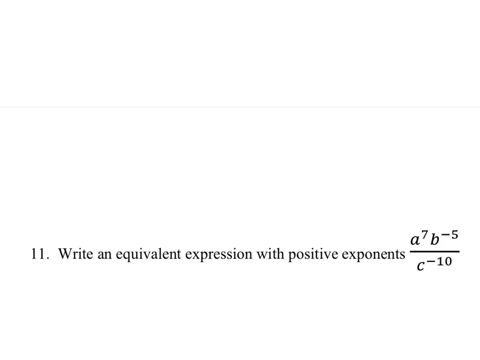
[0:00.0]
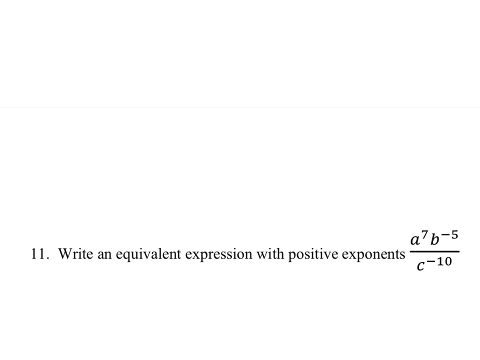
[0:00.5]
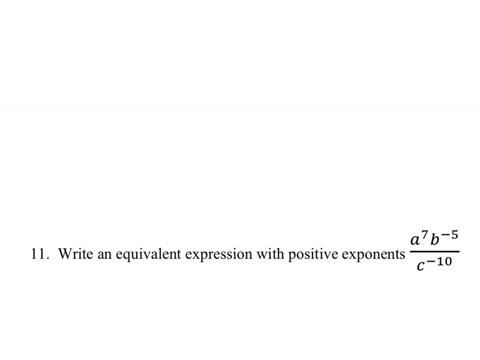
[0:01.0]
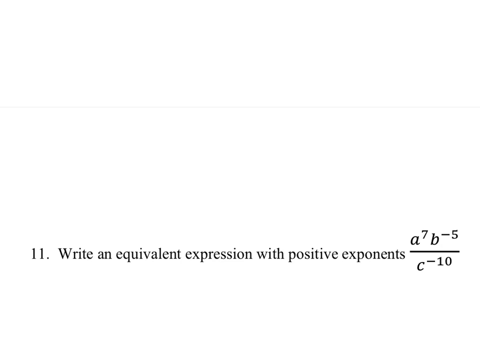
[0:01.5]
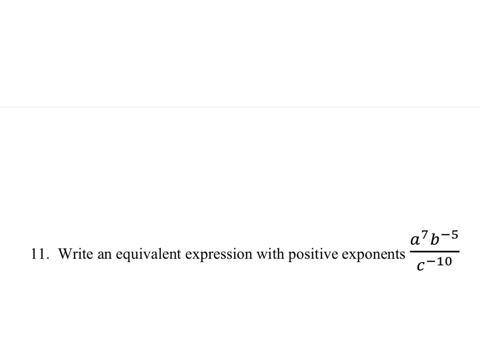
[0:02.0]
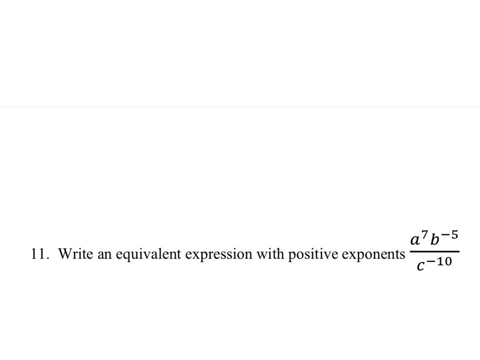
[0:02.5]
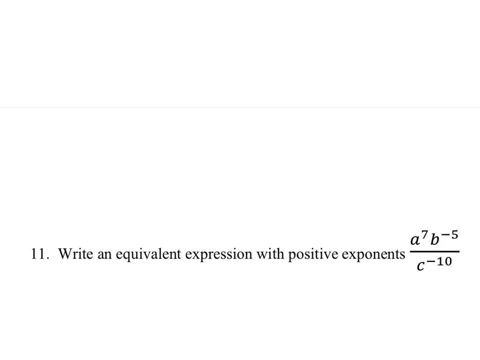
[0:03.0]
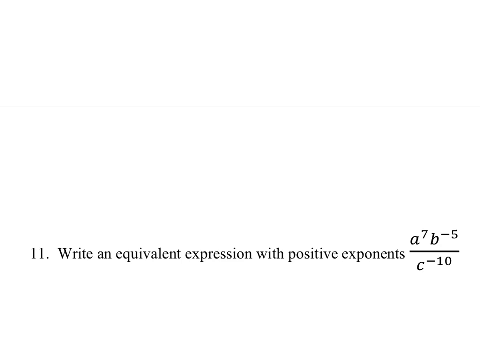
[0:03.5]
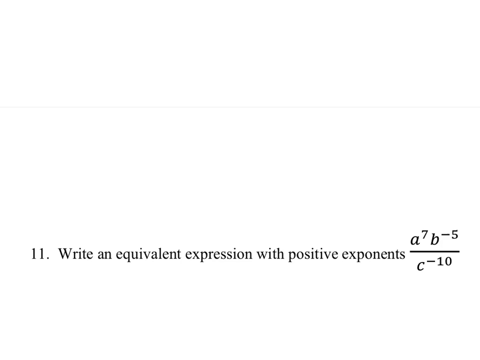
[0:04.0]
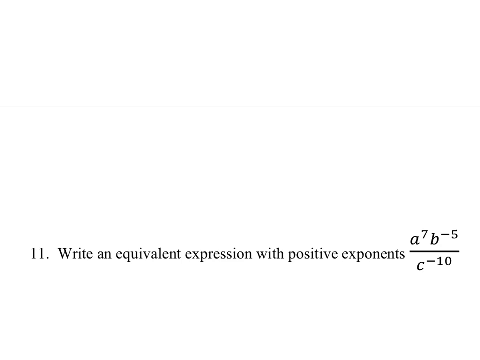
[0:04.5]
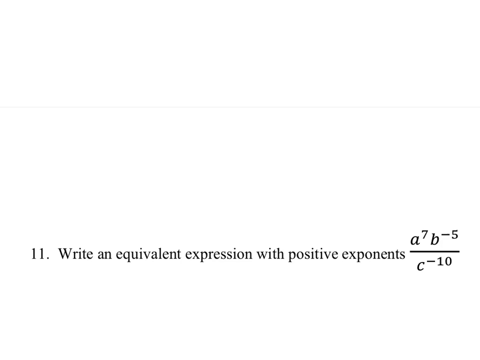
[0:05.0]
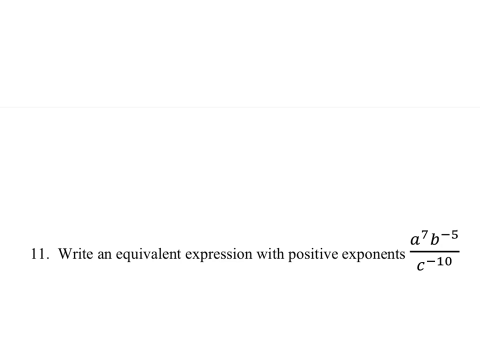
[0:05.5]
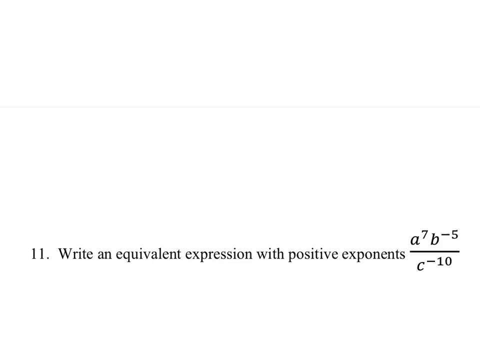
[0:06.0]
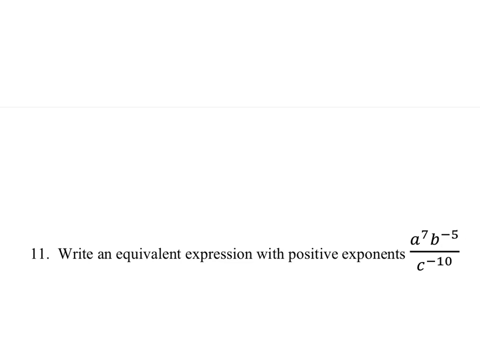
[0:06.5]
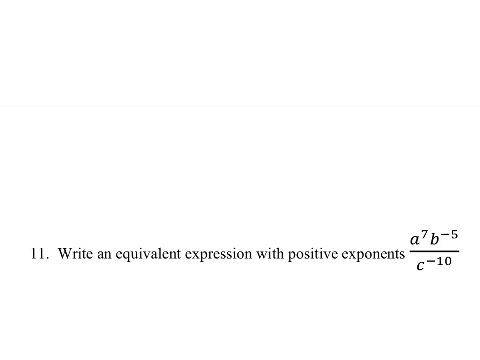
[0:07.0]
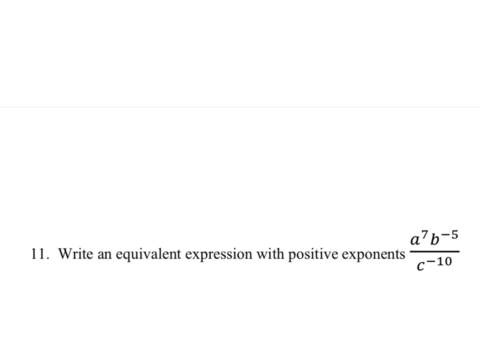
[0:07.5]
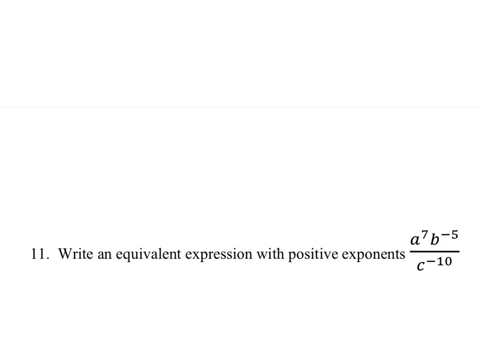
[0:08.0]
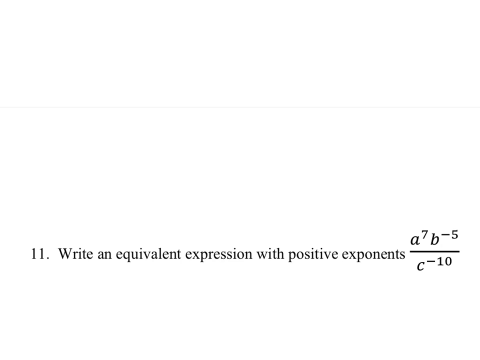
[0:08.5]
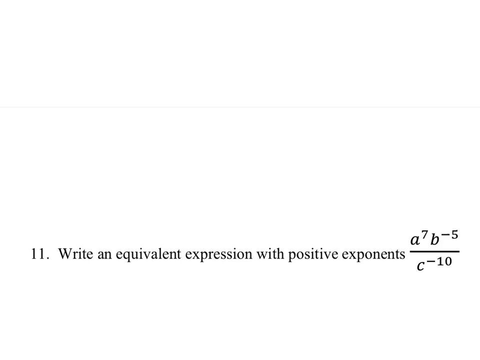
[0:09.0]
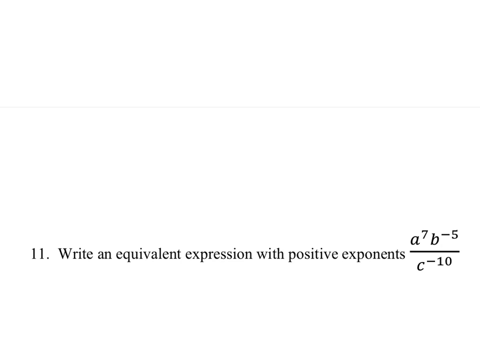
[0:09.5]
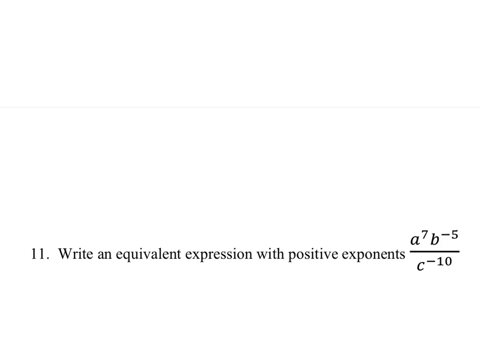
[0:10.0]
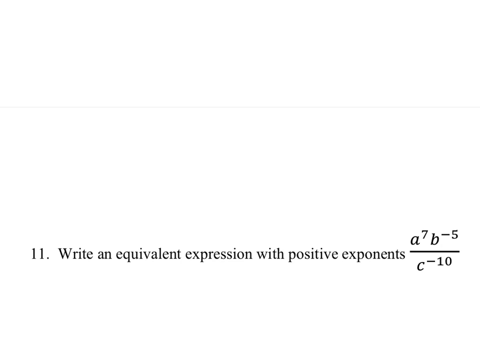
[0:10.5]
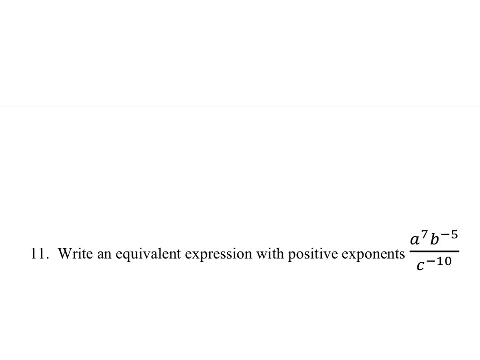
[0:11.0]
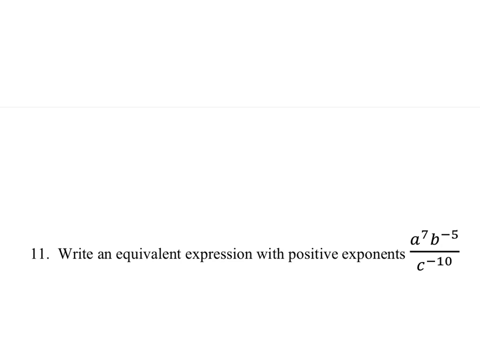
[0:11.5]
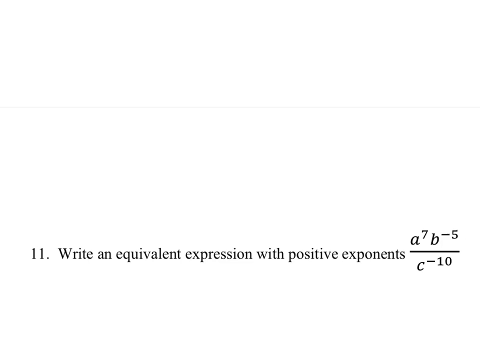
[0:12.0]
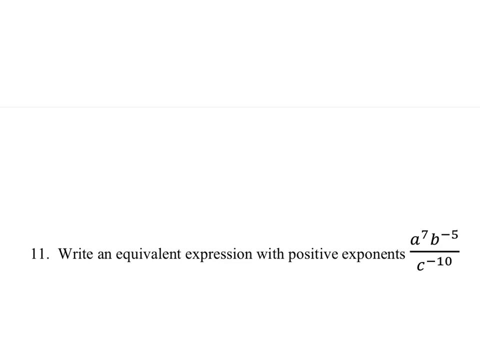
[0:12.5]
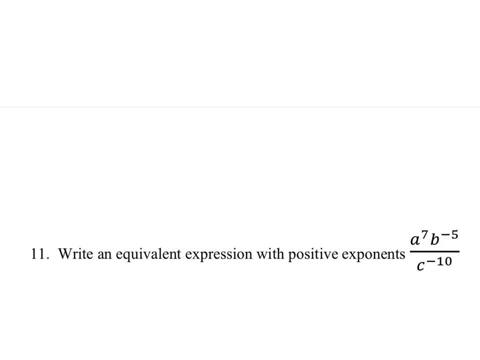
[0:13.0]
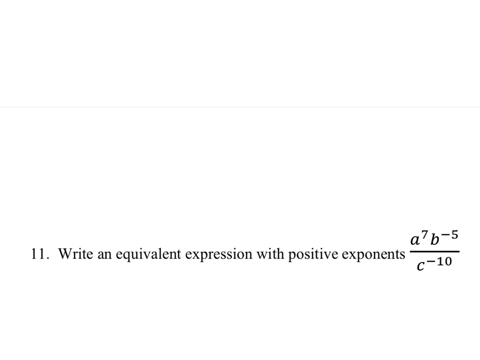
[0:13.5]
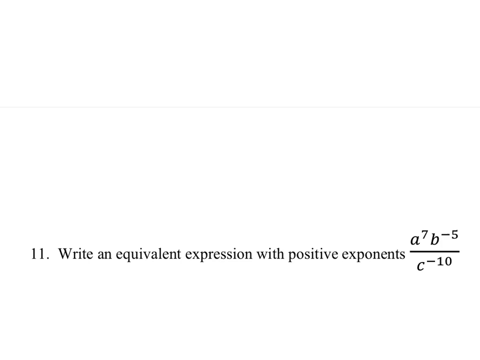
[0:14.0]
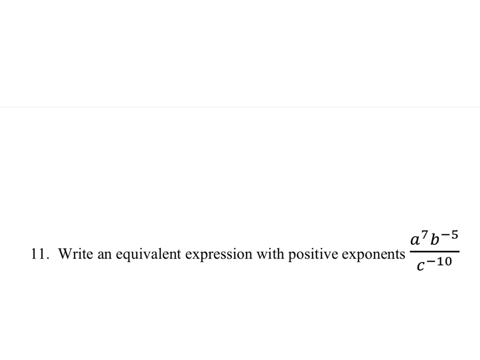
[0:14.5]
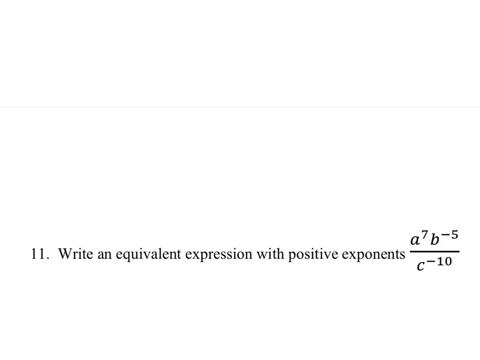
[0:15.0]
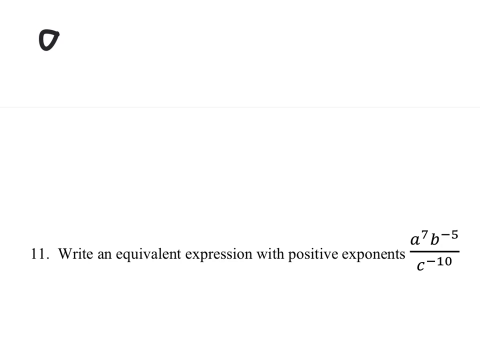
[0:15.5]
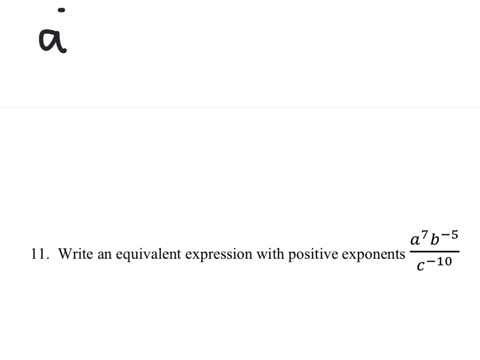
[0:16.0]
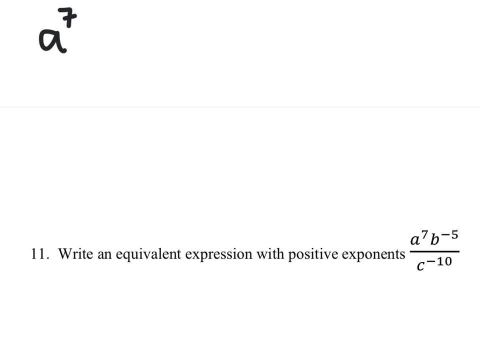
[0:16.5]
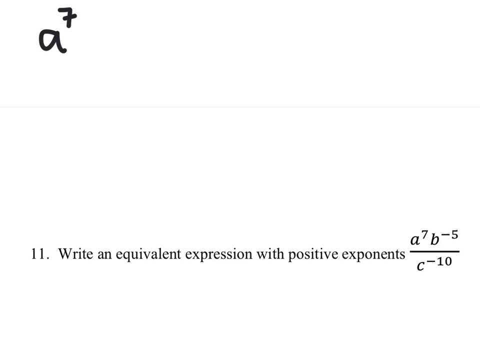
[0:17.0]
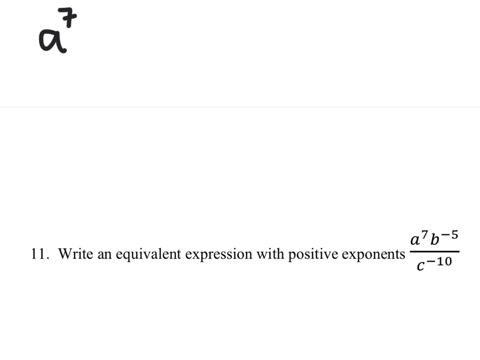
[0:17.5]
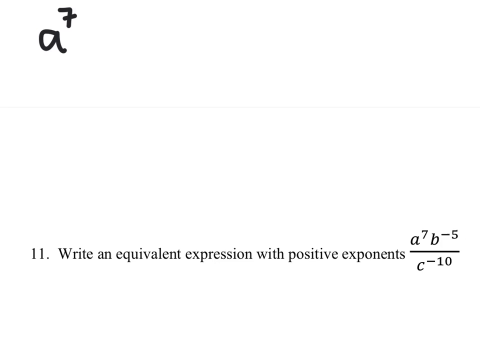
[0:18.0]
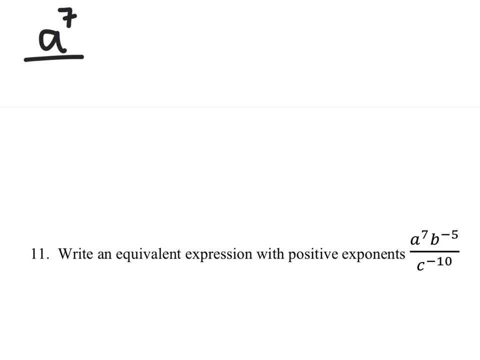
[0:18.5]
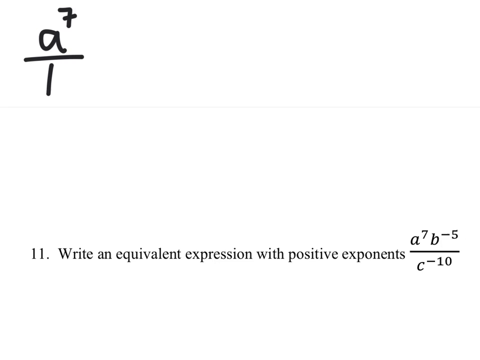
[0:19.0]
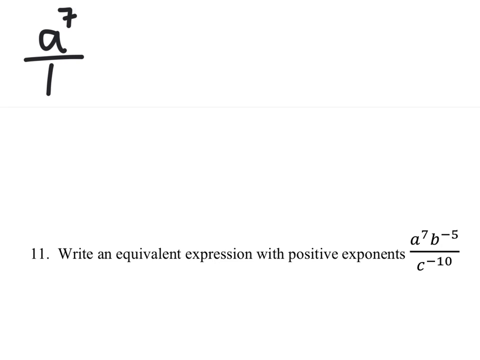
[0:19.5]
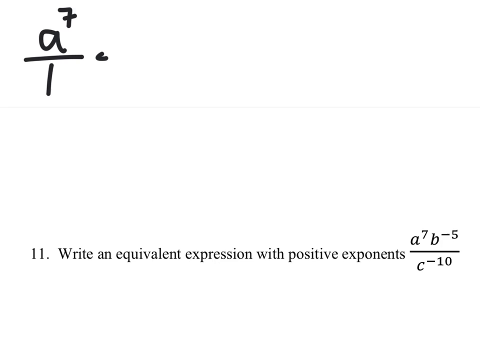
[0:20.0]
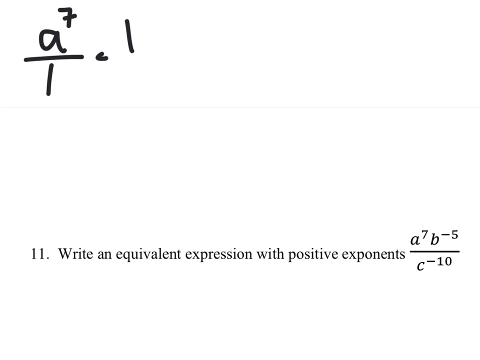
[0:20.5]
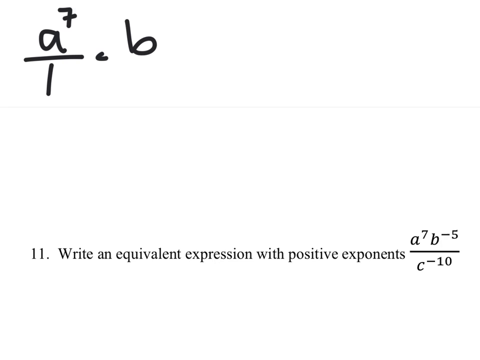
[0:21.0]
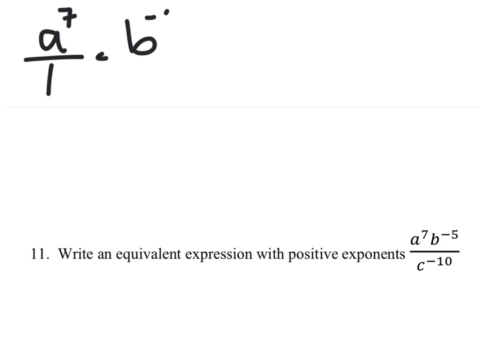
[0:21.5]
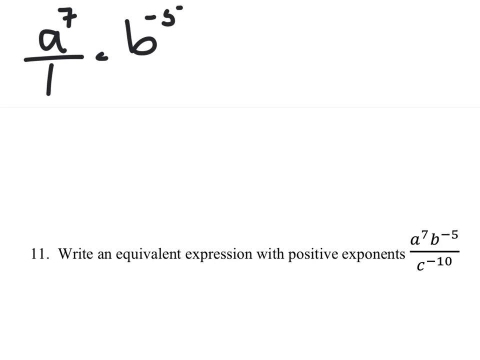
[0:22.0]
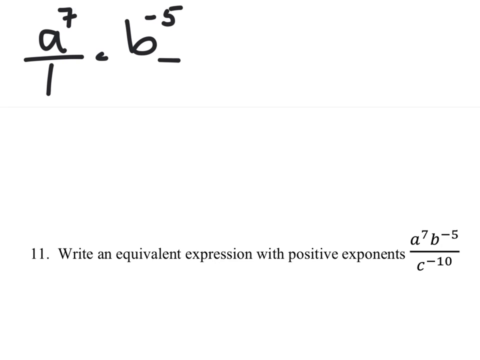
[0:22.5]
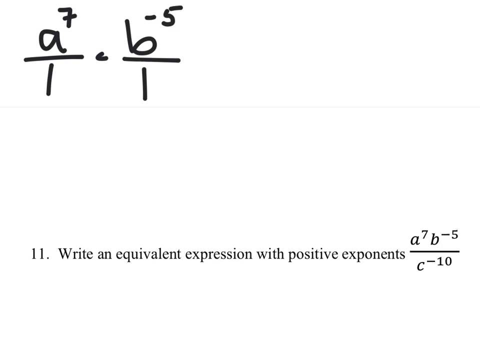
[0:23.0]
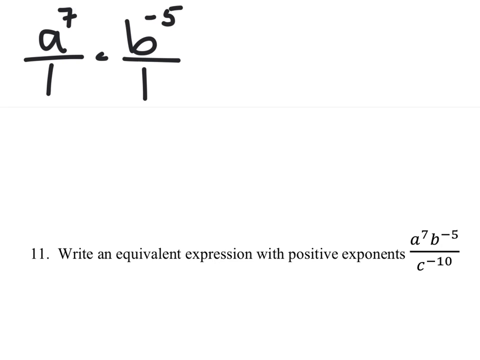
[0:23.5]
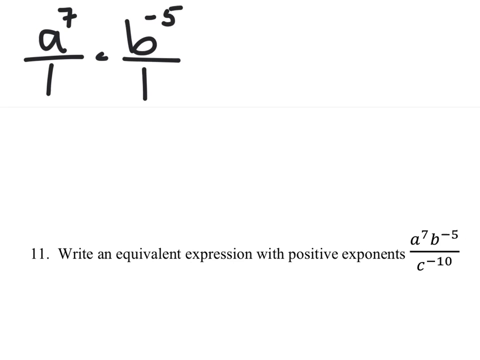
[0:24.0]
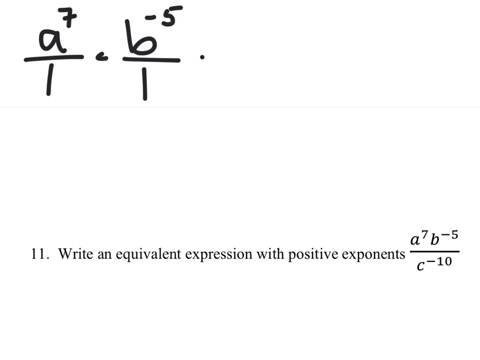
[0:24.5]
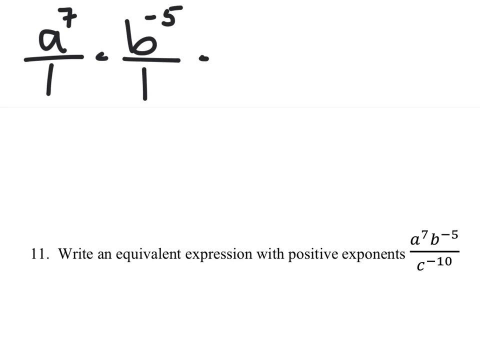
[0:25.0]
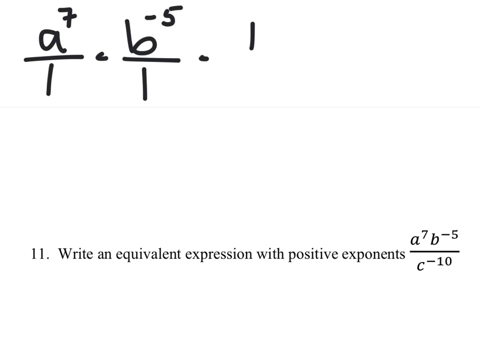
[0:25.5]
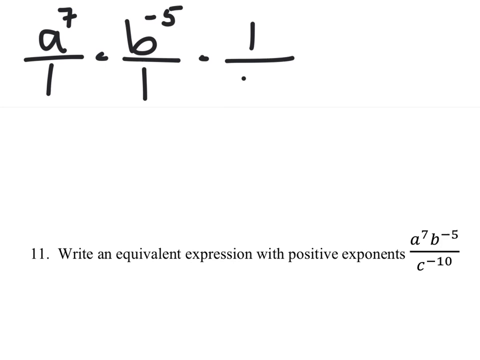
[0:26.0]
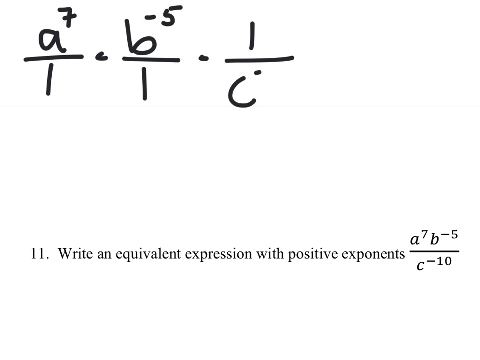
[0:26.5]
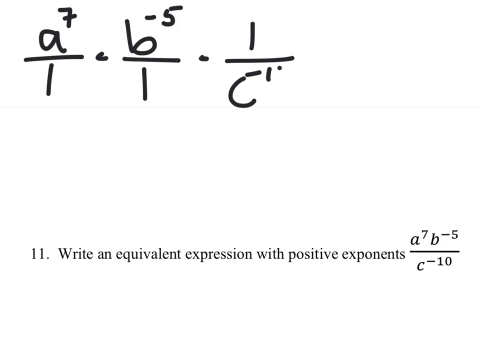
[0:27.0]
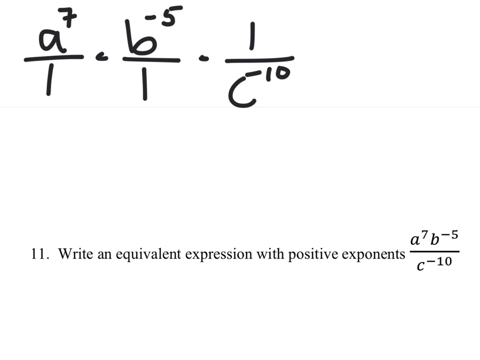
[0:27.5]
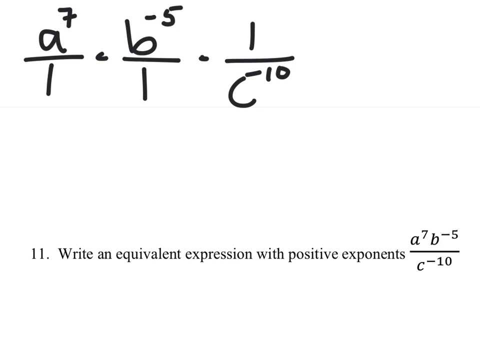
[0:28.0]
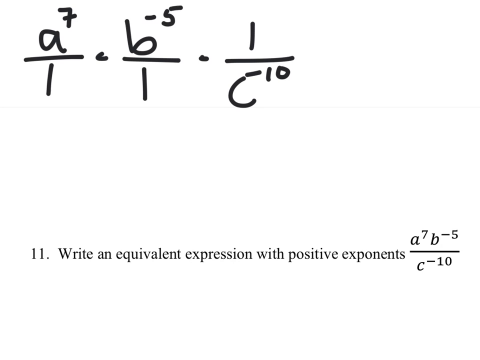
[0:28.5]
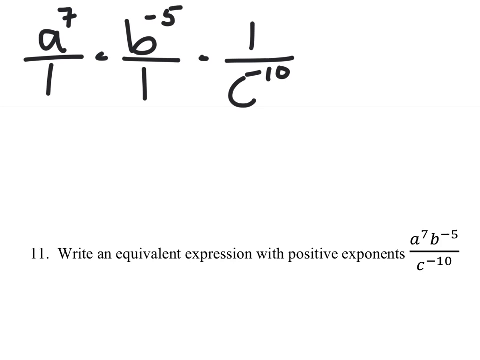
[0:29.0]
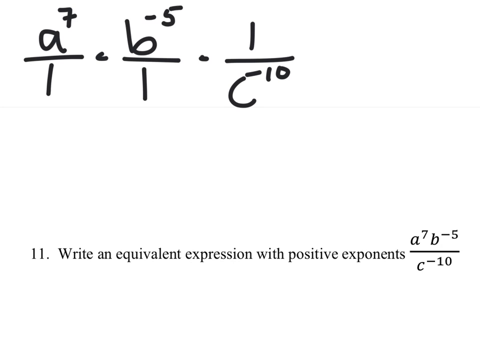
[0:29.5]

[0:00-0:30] Against a white background, an exercise labeled number 11 reads "write an equivalent expression with positive exponents". Below it is an expression with three letters, a, b and c: a to the exponent 7, b to the exponent minus 5, and c to the negative exponent 10. Only the white background is visible; no hand moves on screen and no person appears. As the video plays, "a to the exponent 7 divided by 1" appears, as if being written on a board. No hand is seen, only something moving like a marking pen as it writes the numbers. Three terms are written: a to the exponent 7 divided by 1, b to the exponent minus 5 divided by 1, and 1 divided by c to the exponent 10. Everything is written in black, apparently with a marking pen, in a handwritten font.